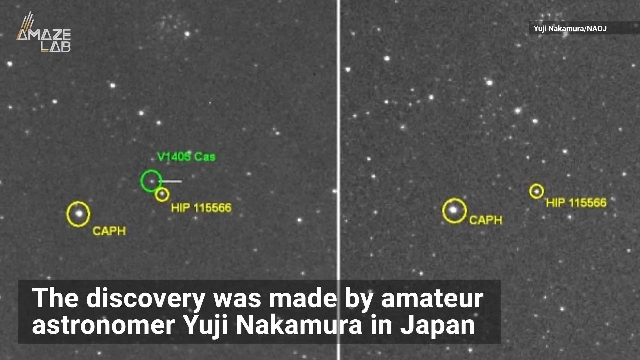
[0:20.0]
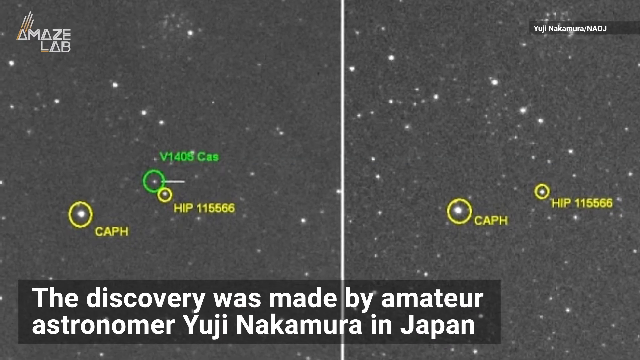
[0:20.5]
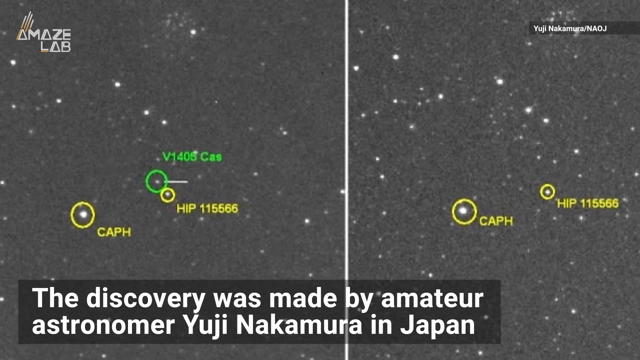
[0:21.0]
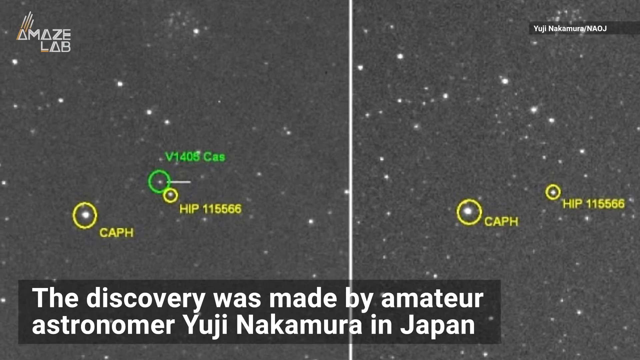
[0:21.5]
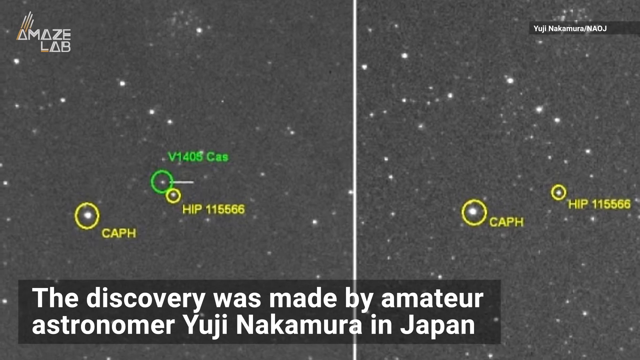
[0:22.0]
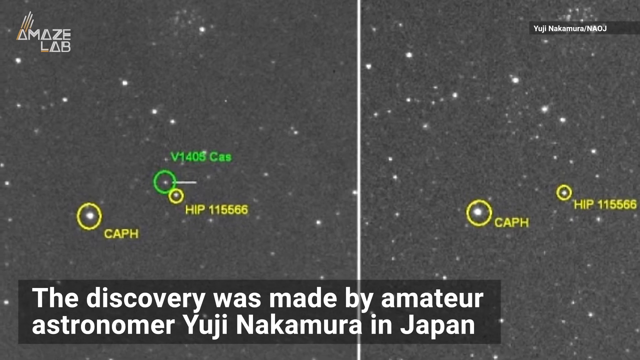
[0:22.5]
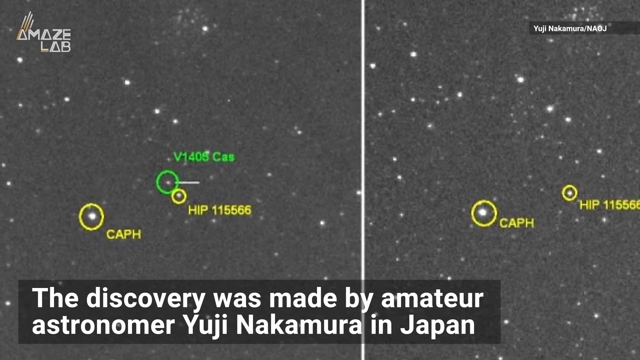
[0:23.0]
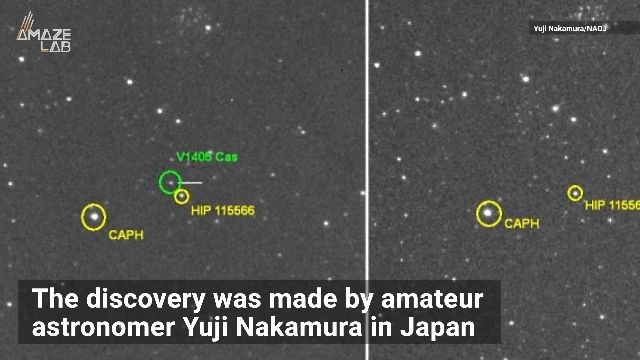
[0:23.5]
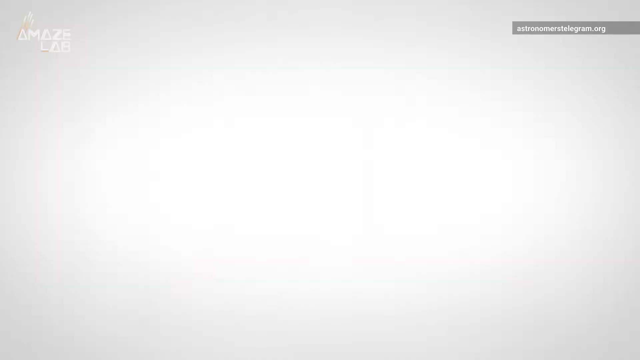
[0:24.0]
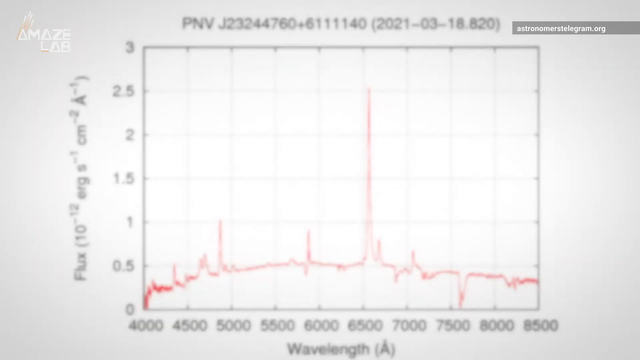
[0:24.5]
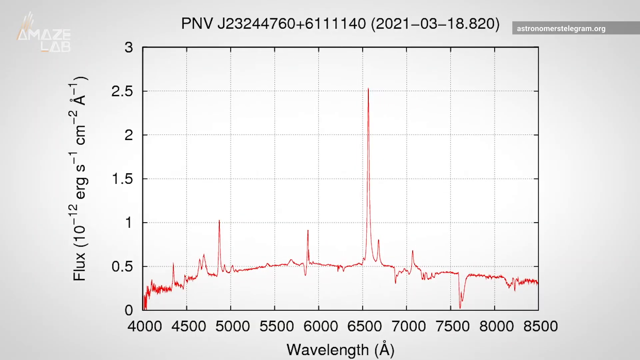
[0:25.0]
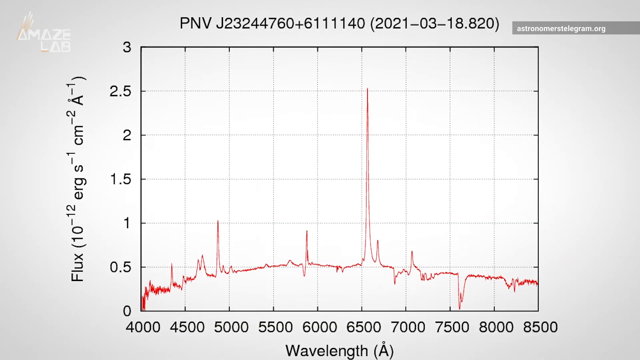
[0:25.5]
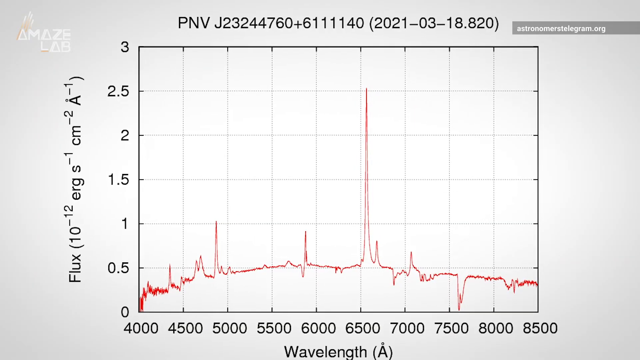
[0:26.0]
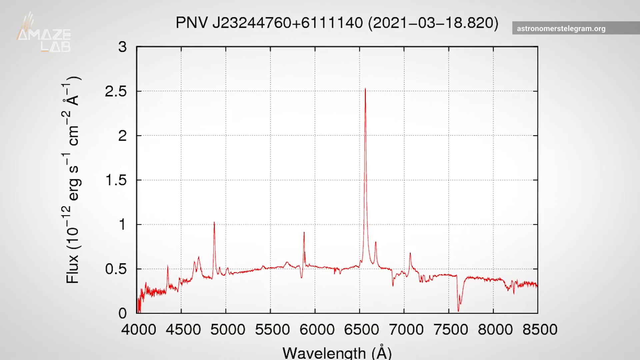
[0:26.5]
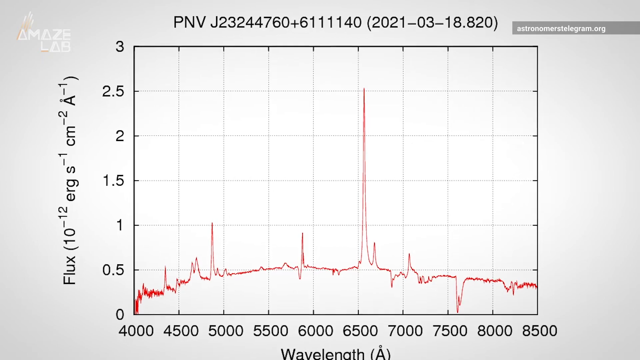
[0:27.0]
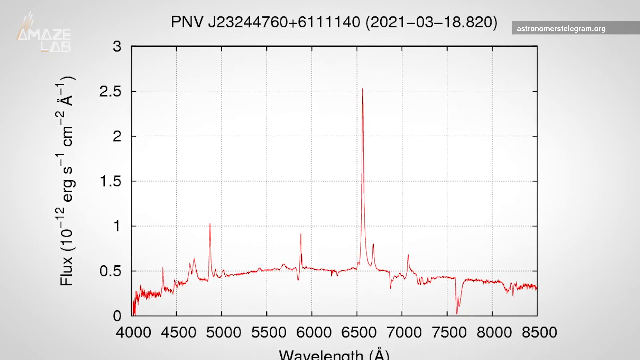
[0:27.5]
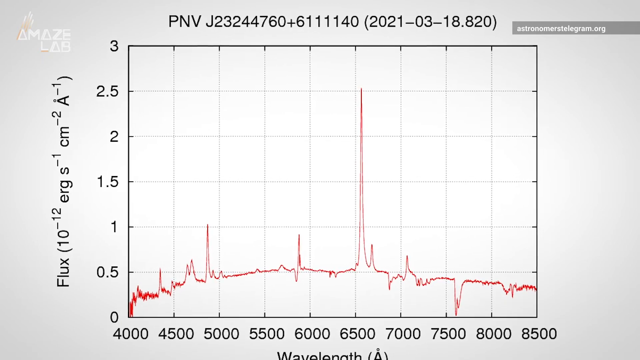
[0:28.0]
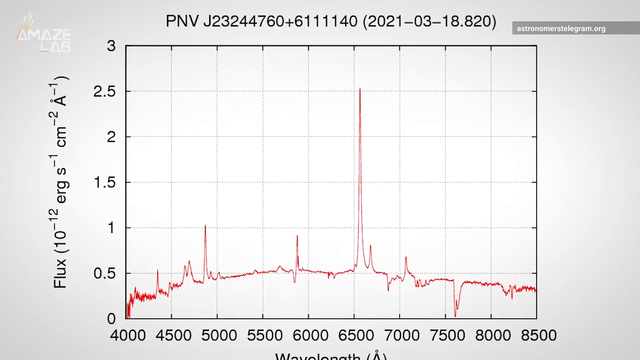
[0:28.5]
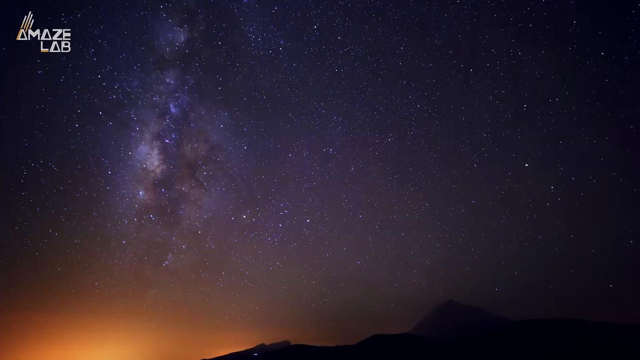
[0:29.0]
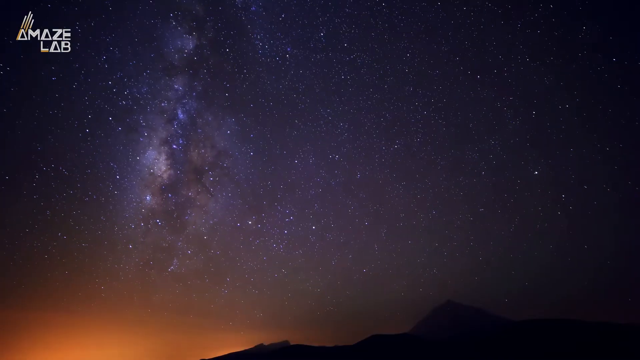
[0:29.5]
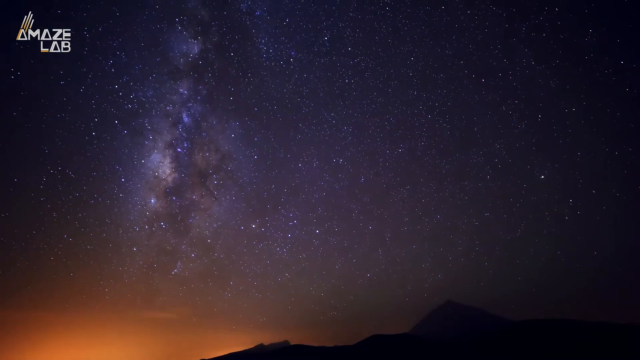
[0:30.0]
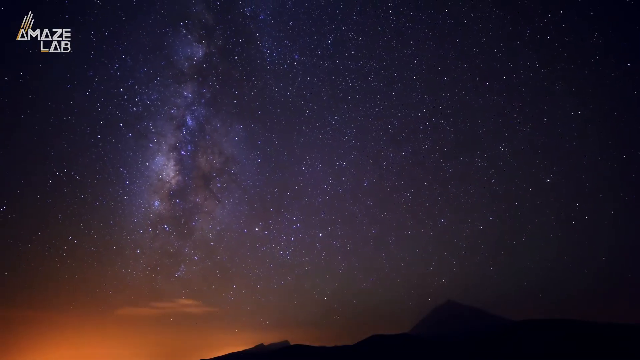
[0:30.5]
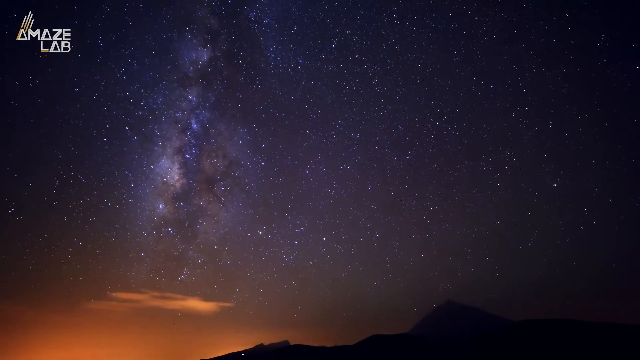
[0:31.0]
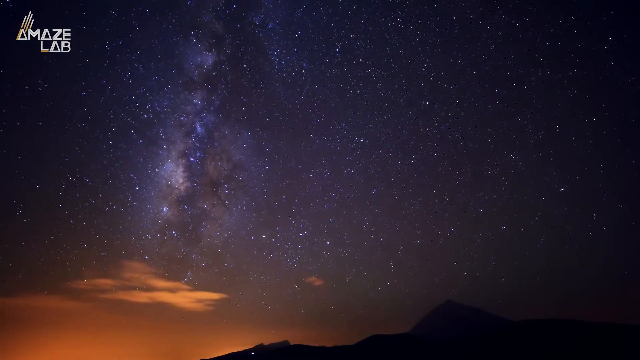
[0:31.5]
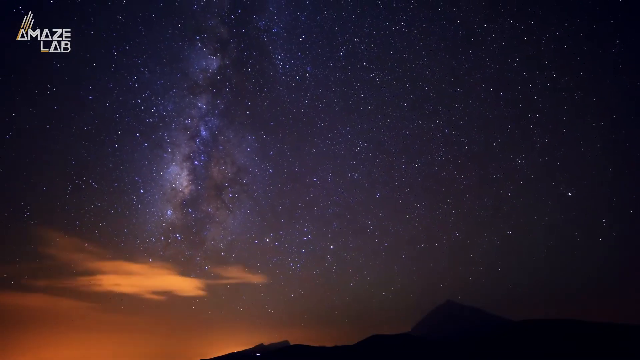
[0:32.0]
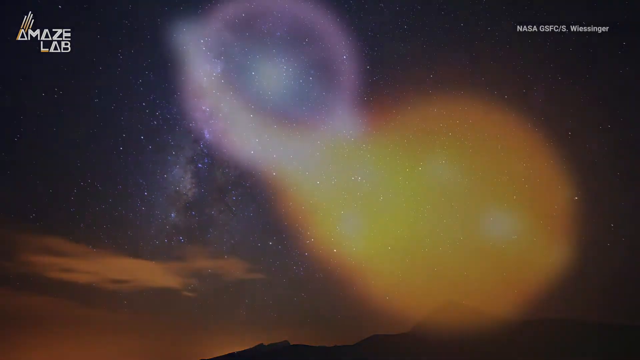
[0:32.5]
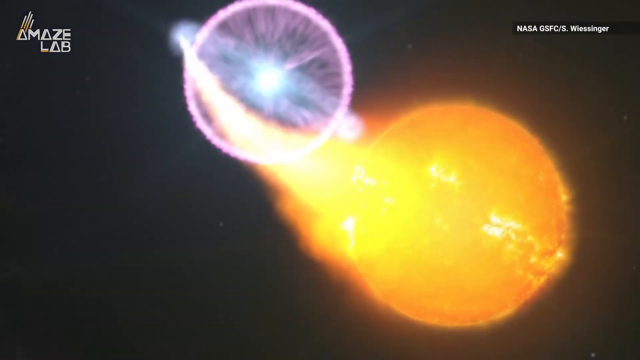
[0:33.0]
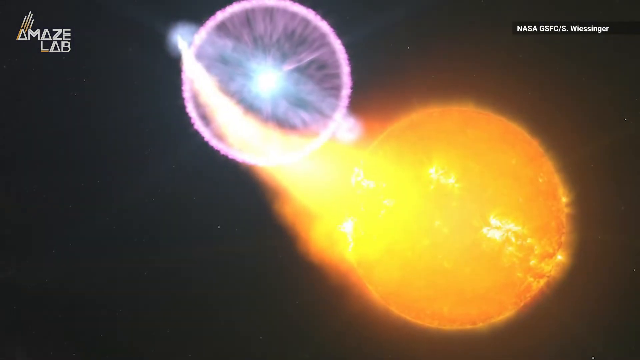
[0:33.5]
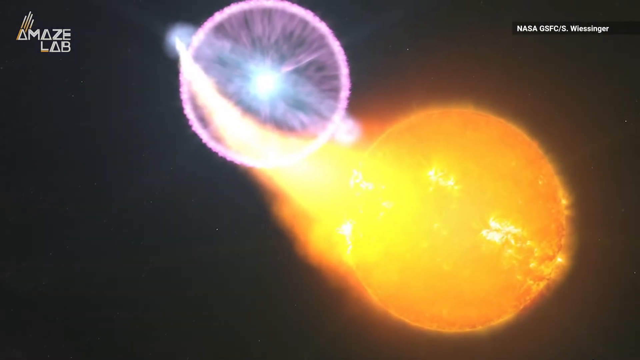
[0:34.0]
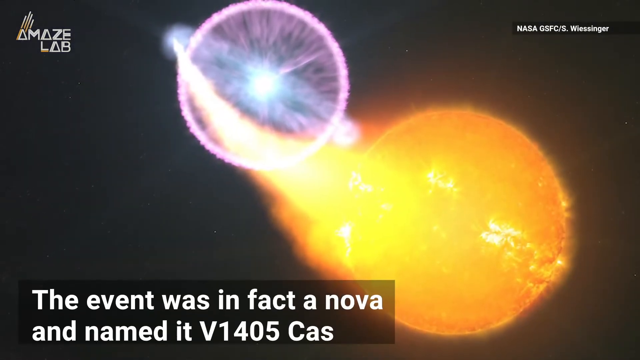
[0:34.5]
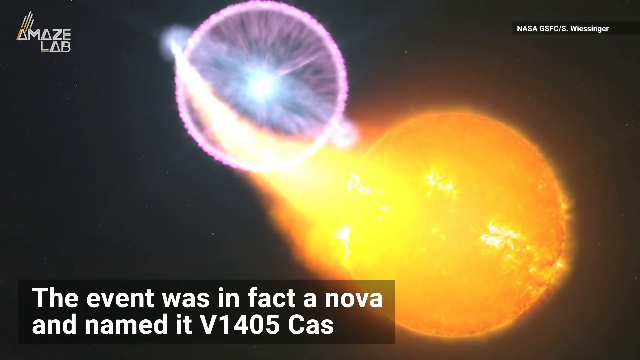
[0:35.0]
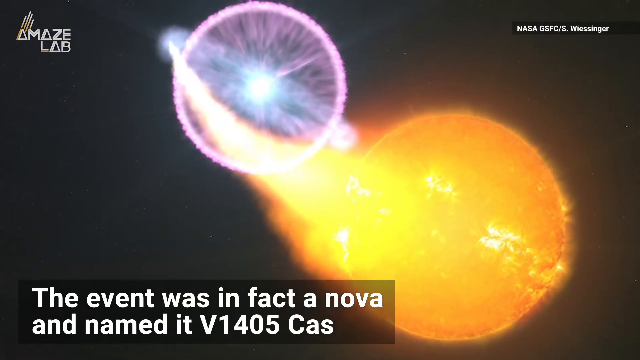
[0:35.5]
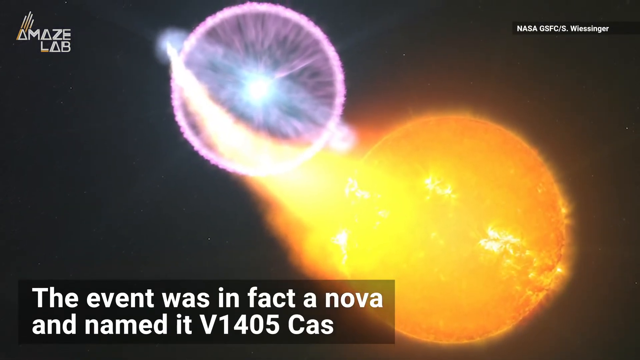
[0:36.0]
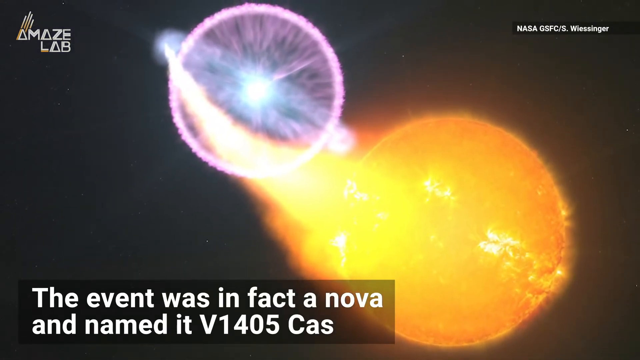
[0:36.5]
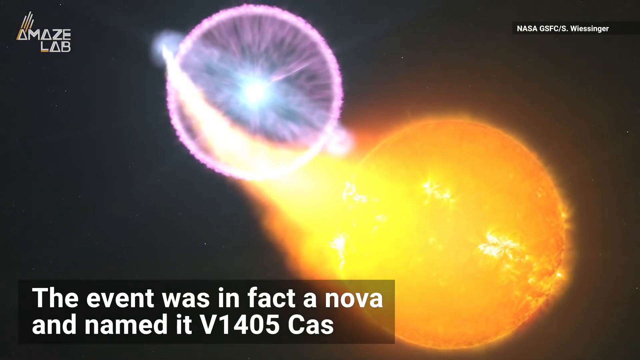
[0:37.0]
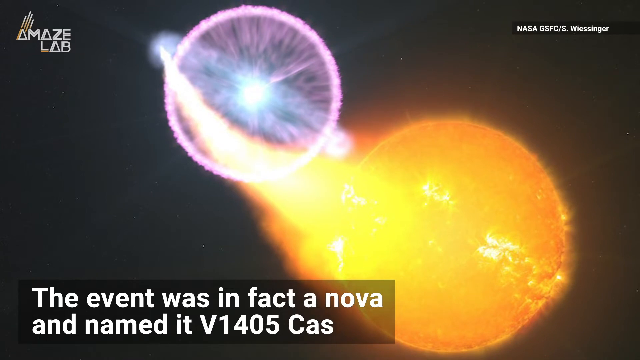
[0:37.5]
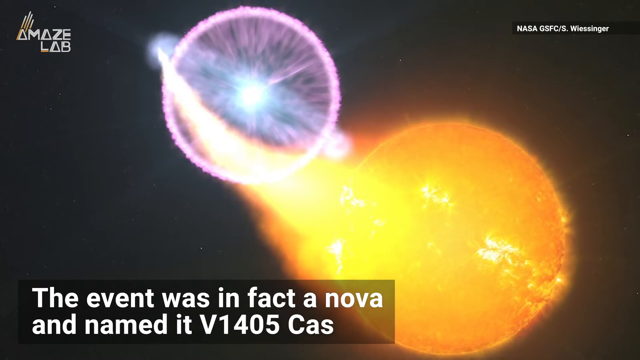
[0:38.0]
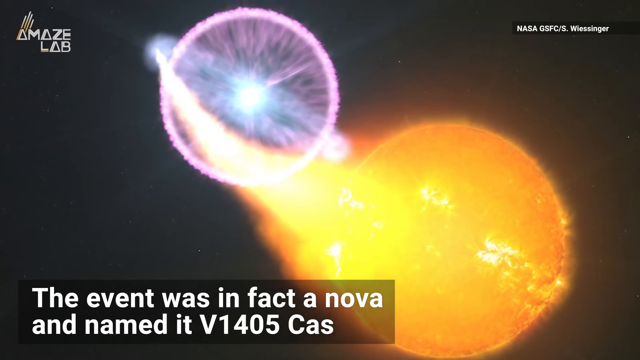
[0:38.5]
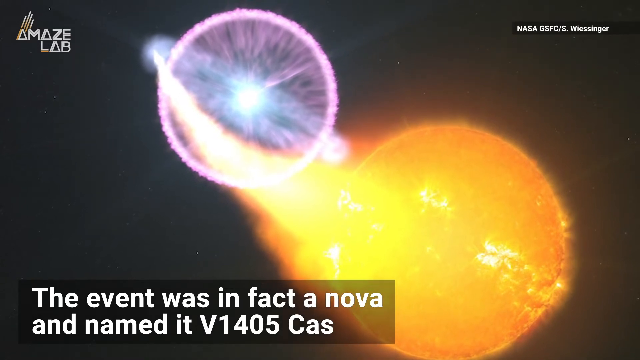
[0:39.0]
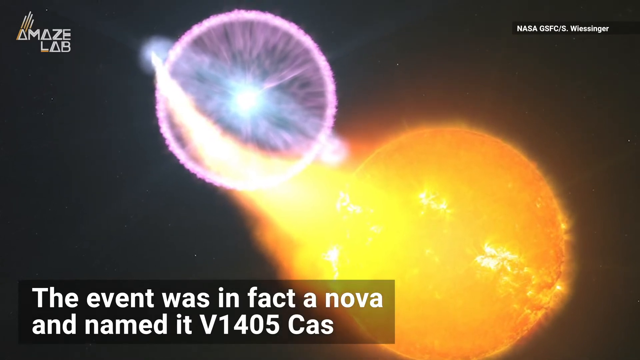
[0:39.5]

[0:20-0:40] Scenes that appear to be filmed, maybe from a telescope, carry text beneath them mentioning that the discovery was made by amateur astronomer Yuii Nakamura in Japan. On the left-hand side are various yellow circles around specific objects in the sky, along with a green highlighted object, and there are various yellow objects on the other side. The view zooms in slightly. A chart follows, with a flux scale up the left-hand side and a wavelength scale across the base axis. The view then switches to the sky with colourful clouds going past, and then two circles appear: one is a huge gas object almost igniting, and directly above it is something that looks a bit like a human eye but is probably a planet as viewed from a telescope. Text mentions that the event was in fact a nova and named it V1405 Cas, and the camera zooms in on this image. The earlier slide, which appears to have been saved by the amateur astronomer, has V1405 Cas circled in green in its diagram.